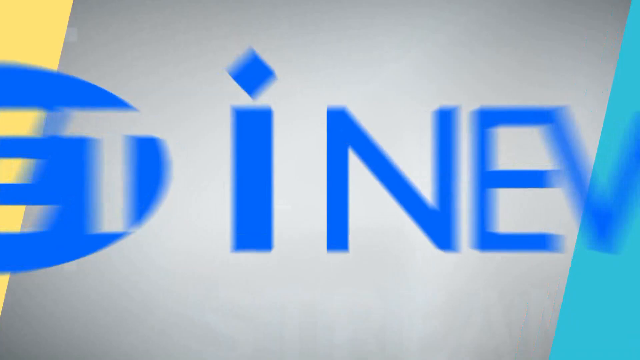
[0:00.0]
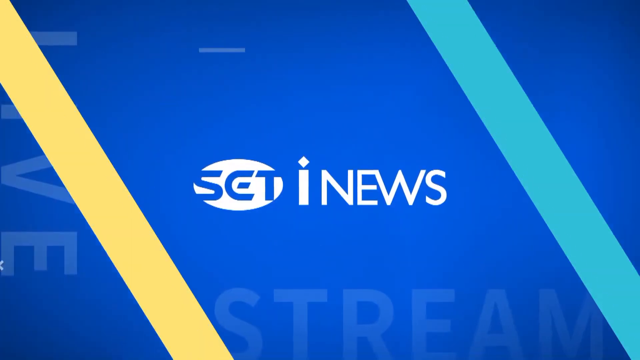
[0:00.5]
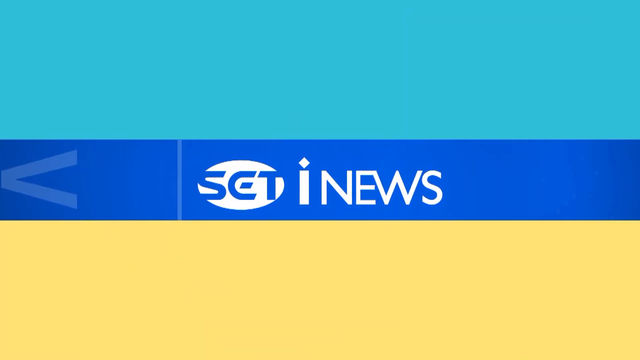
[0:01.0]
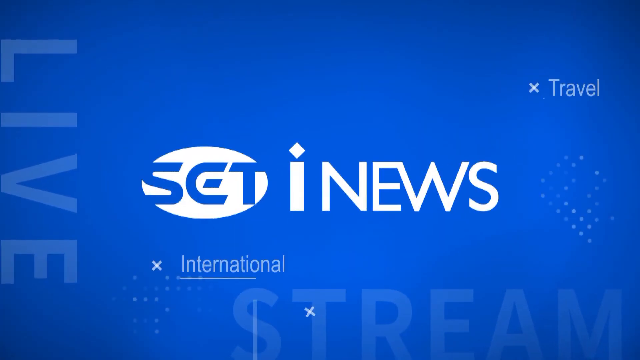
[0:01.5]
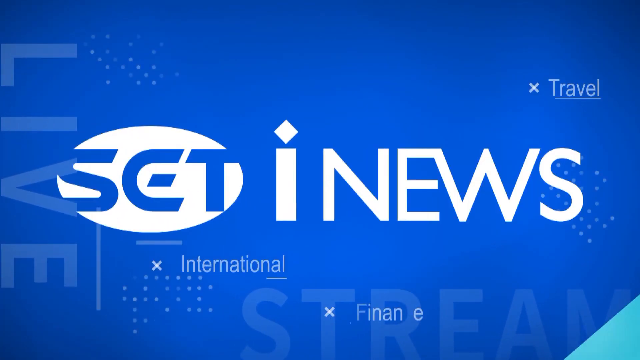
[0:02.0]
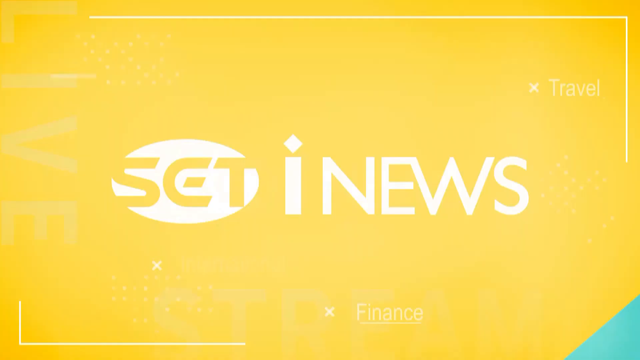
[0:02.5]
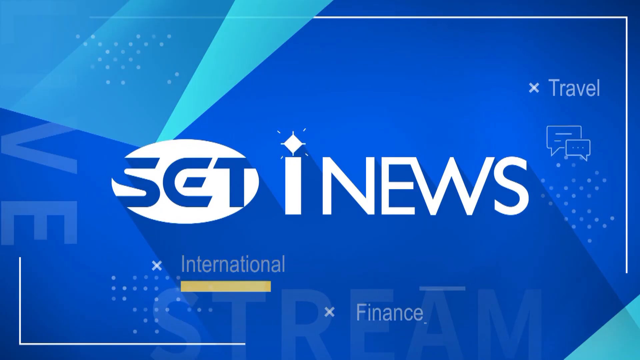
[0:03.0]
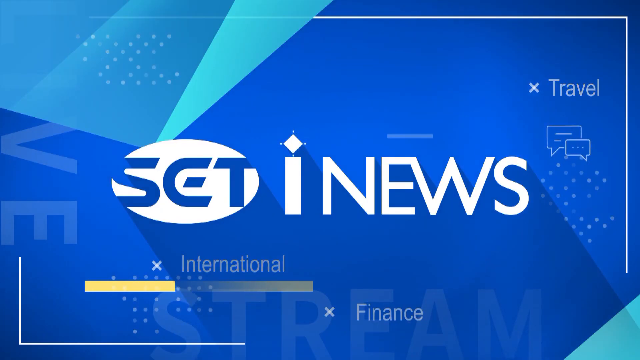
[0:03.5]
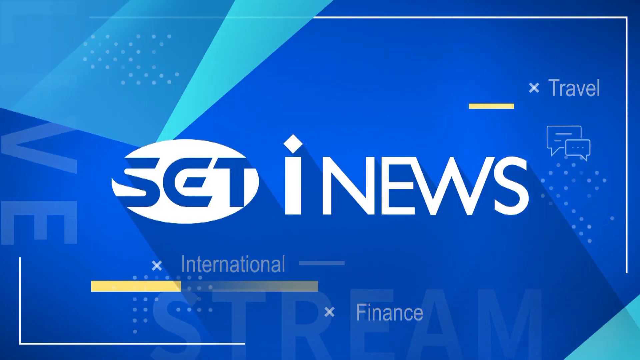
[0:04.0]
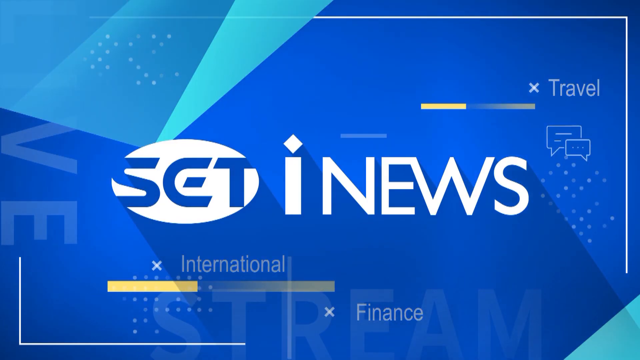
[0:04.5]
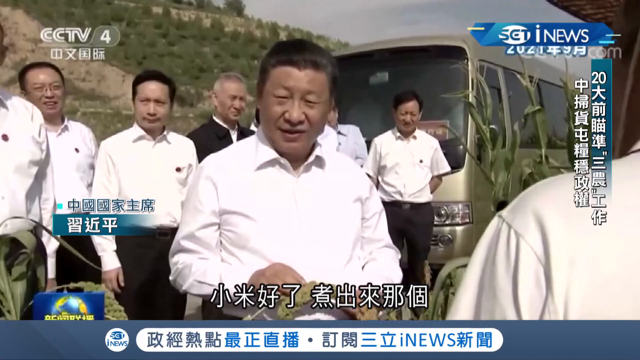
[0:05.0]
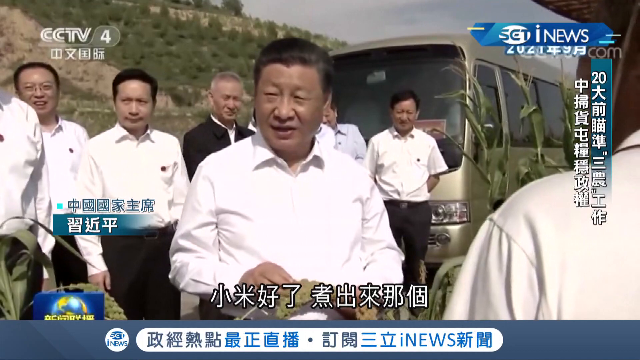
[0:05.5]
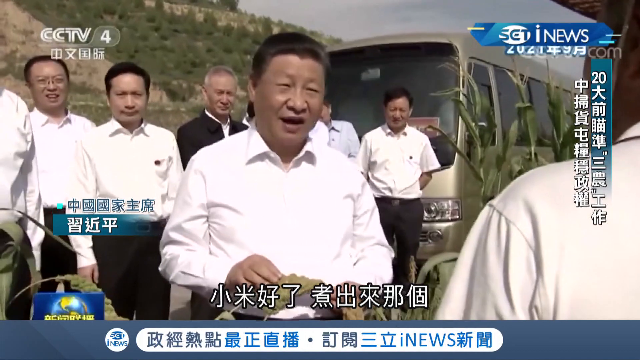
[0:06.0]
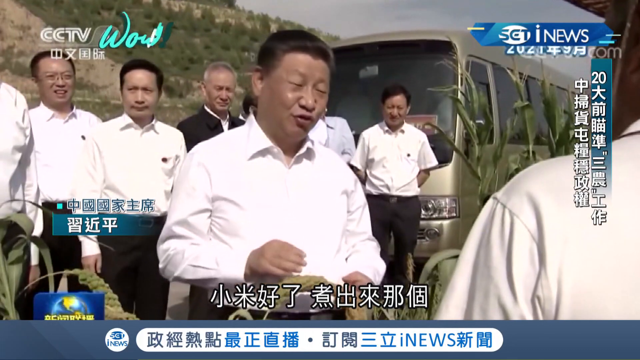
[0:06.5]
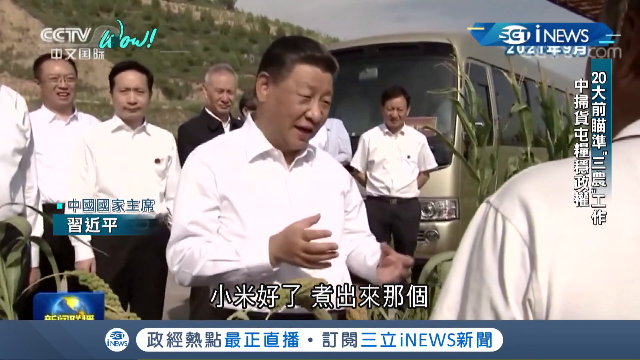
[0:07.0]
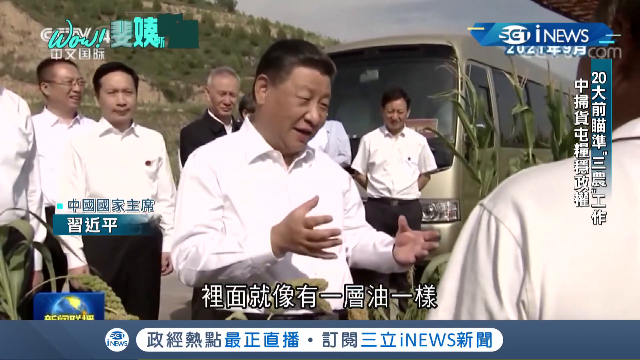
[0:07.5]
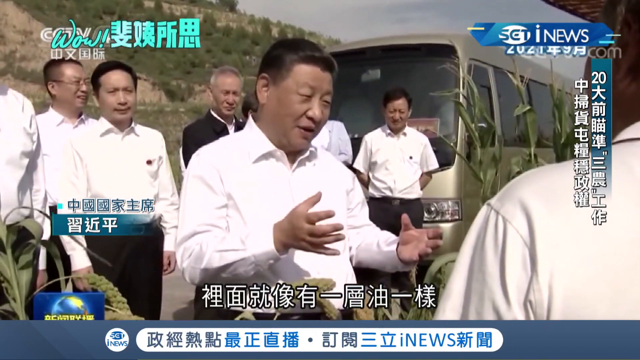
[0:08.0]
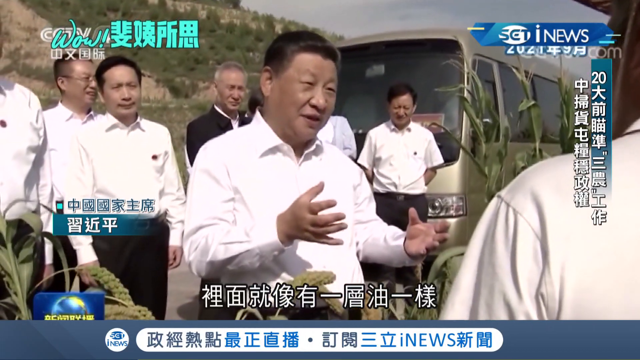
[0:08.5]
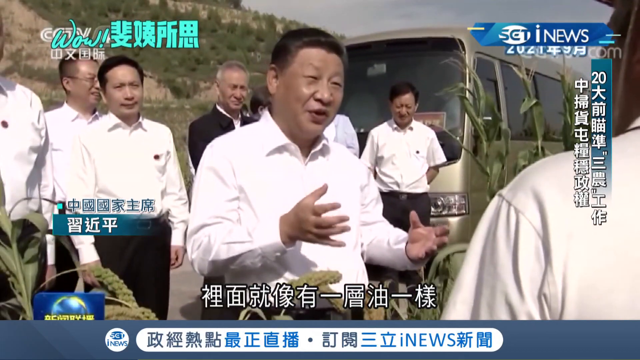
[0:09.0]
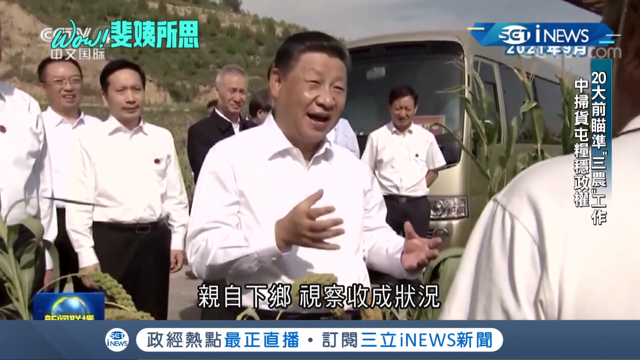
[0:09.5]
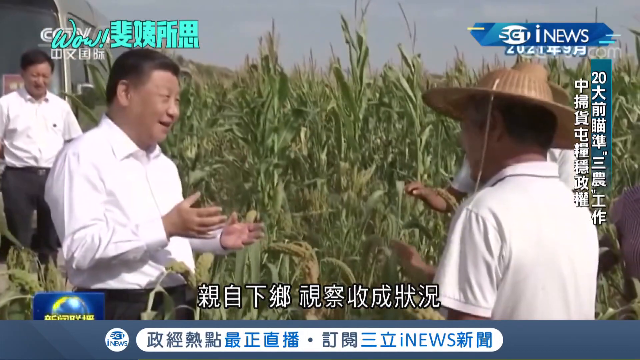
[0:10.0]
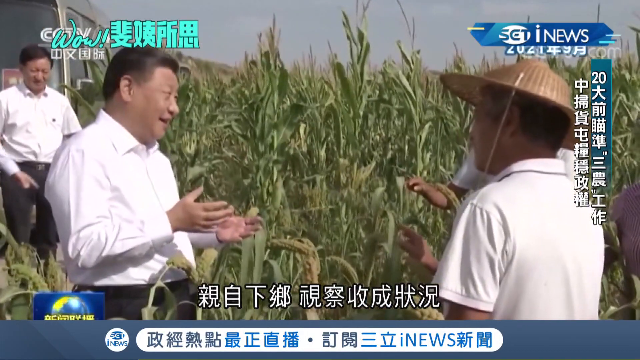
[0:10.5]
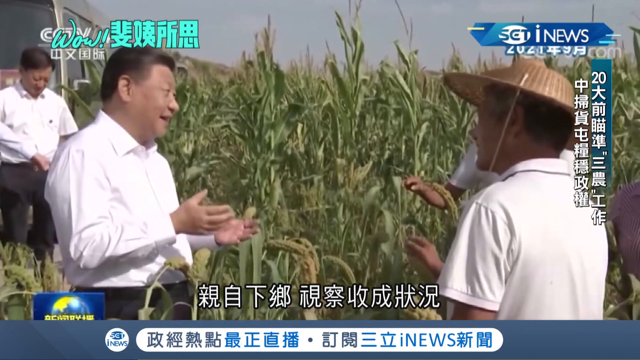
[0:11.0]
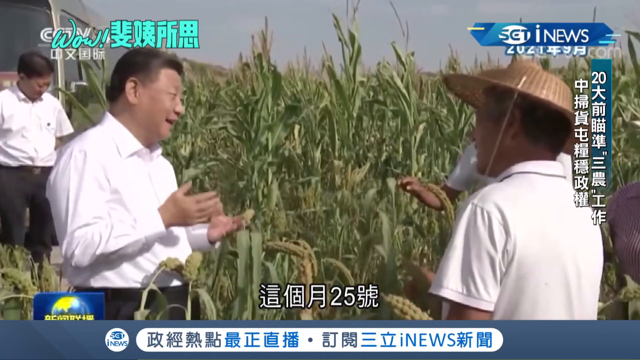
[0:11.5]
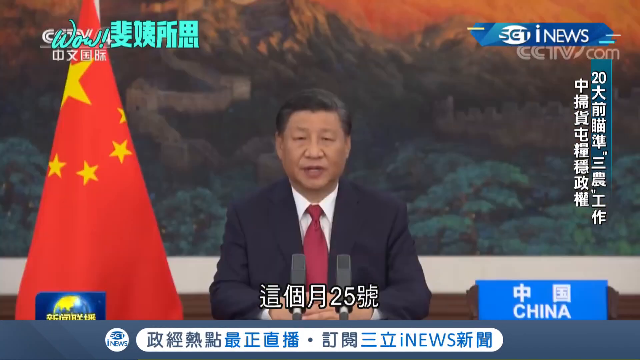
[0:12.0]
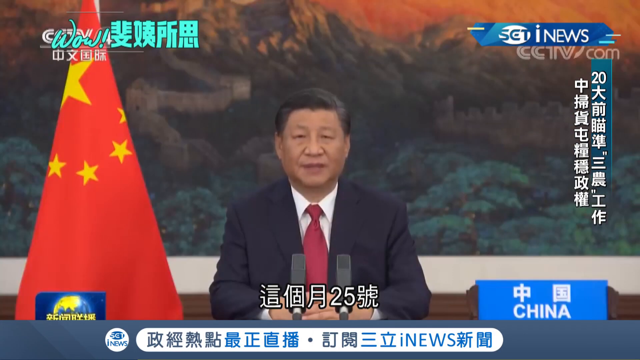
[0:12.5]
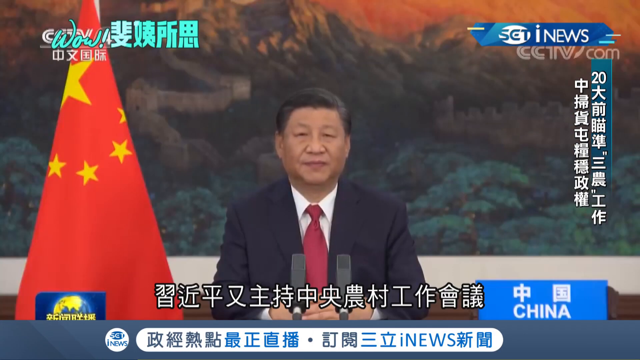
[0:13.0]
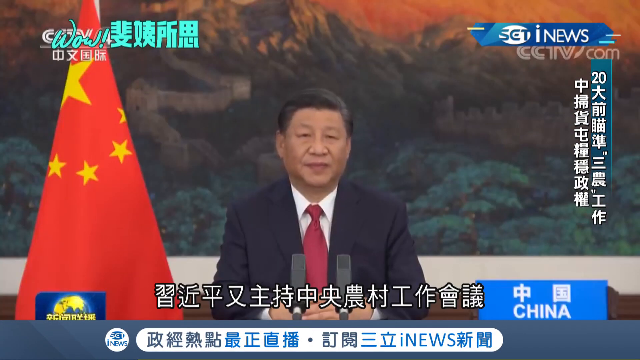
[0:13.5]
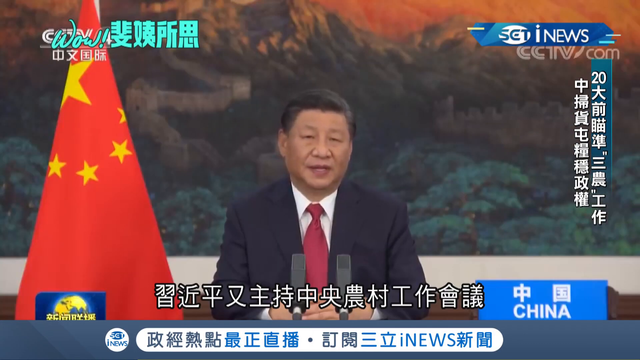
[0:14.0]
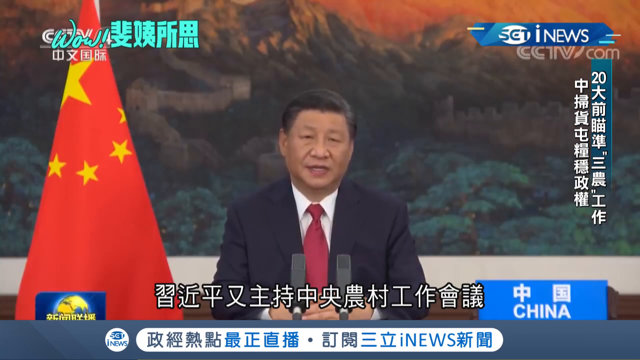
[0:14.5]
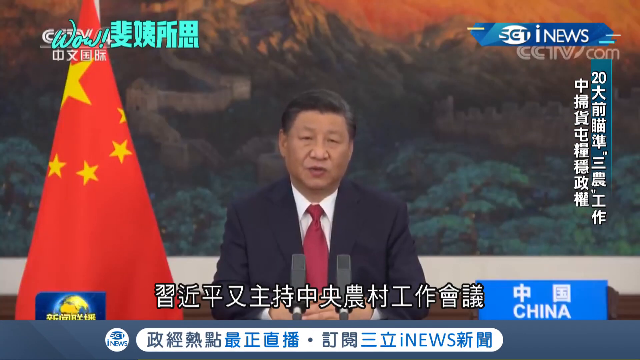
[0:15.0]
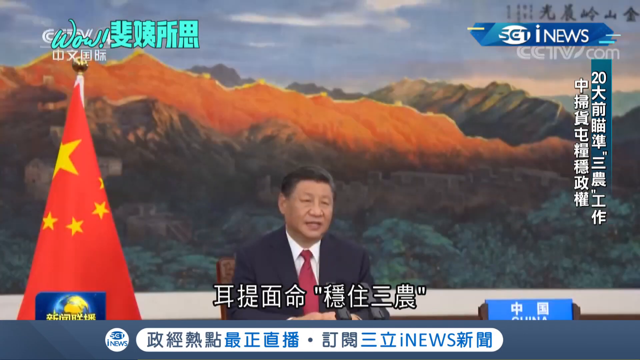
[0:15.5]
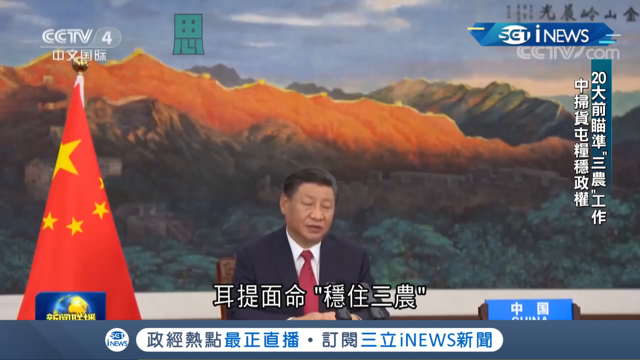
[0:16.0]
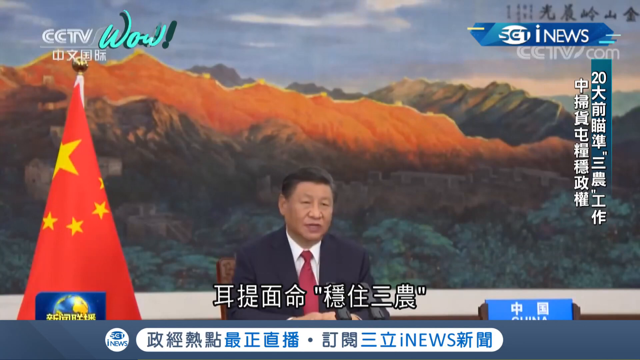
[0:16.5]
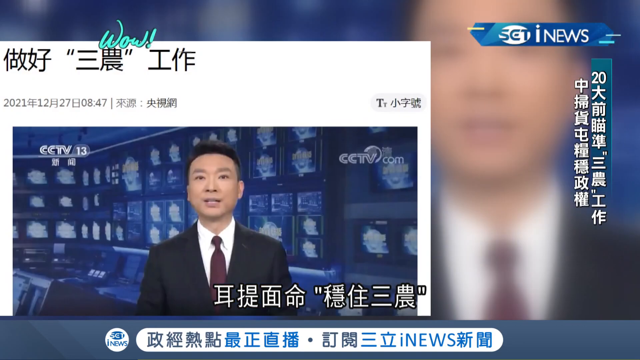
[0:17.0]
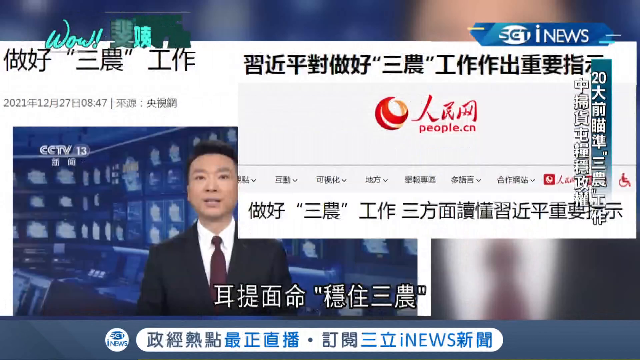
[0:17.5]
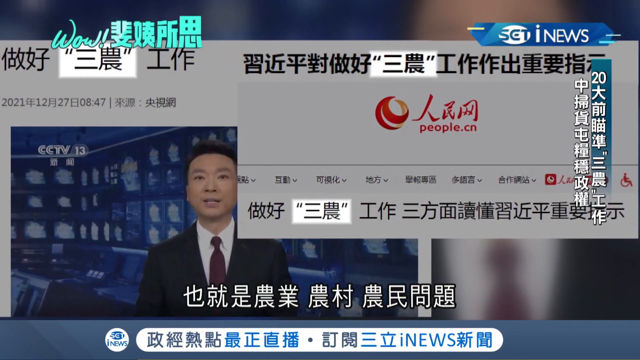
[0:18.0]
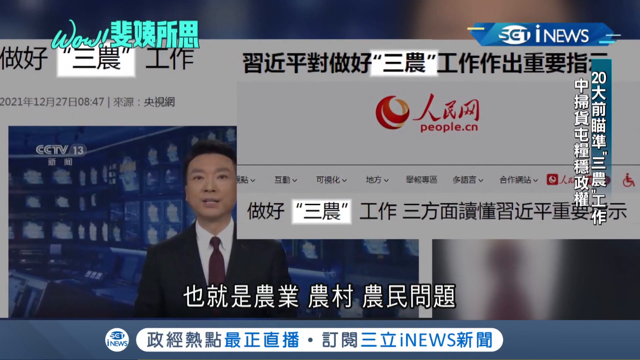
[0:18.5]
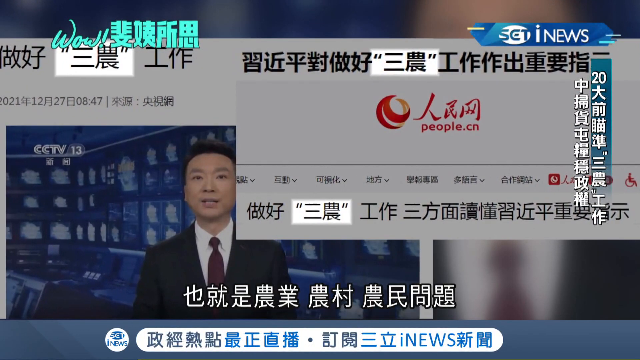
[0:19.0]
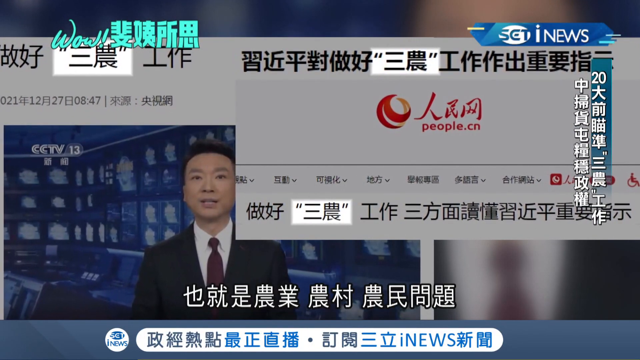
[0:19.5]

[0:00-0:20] The on-screen text "Set High News" appears in the middle of a blue background. Chinese President Xi then talks to a farmer, with cornfields visible in the background, holding his hands outward as he speaks. A large bus is also in the background of this field scene, and the date appears to be 2021. The scene shifts to President Xi sitting alone at a desk with microphones in front of him and a red Chinese flag in the background to the left, behind him. He appears to be giving a live speech to the people of China.